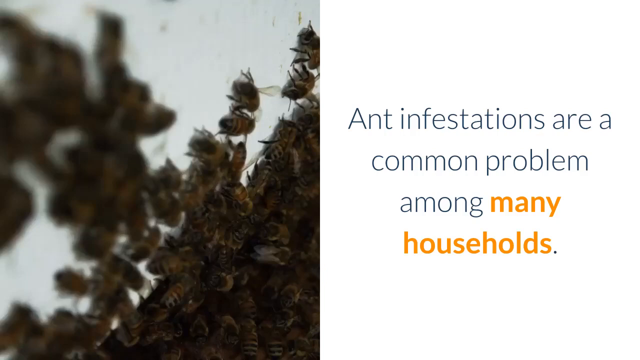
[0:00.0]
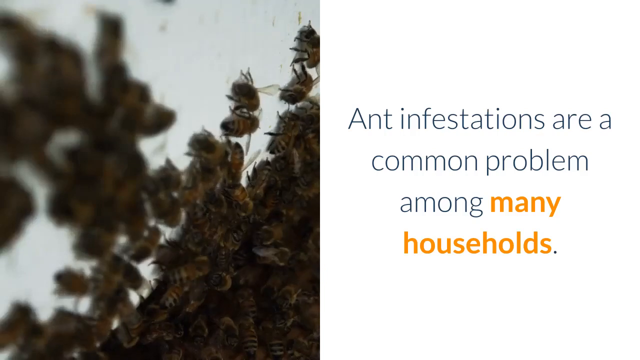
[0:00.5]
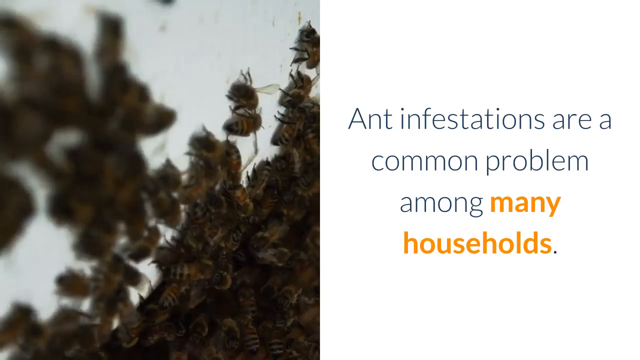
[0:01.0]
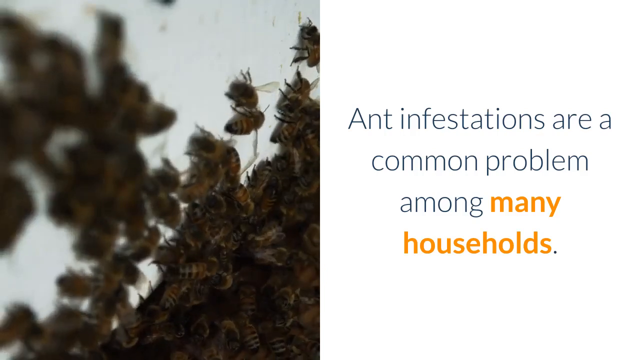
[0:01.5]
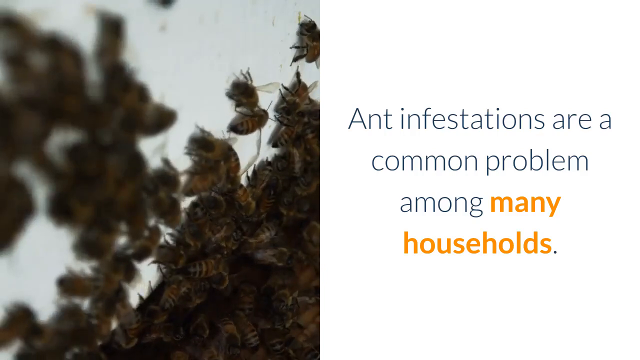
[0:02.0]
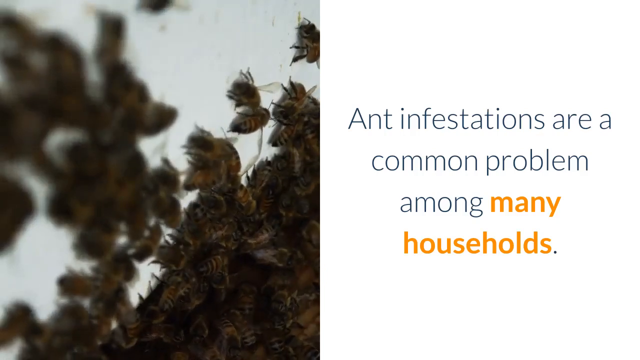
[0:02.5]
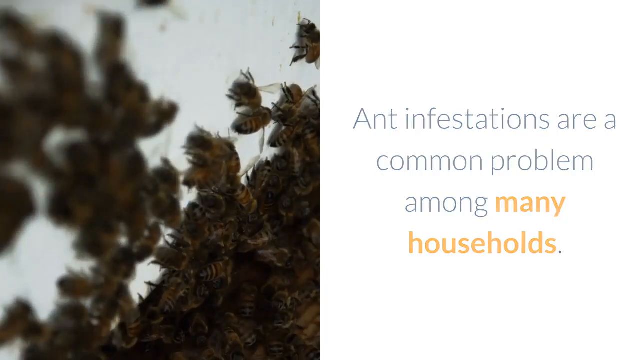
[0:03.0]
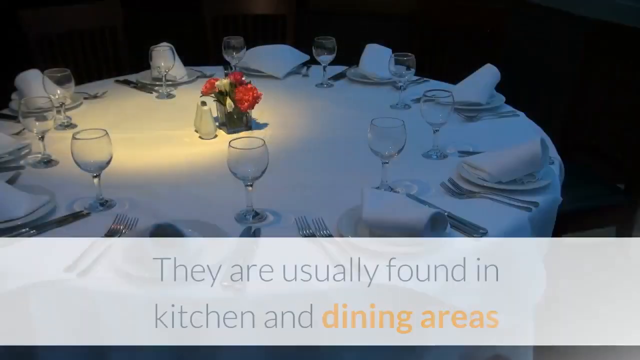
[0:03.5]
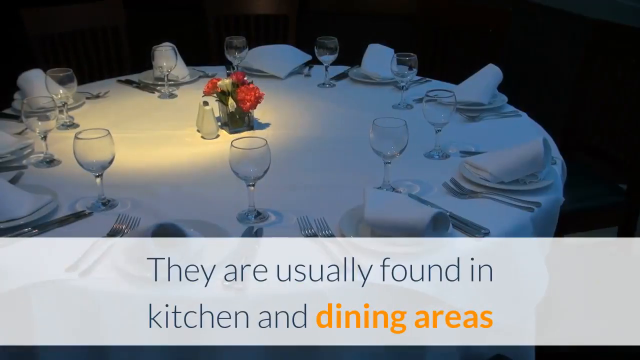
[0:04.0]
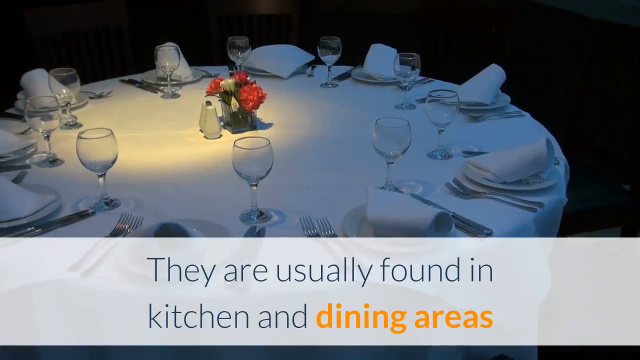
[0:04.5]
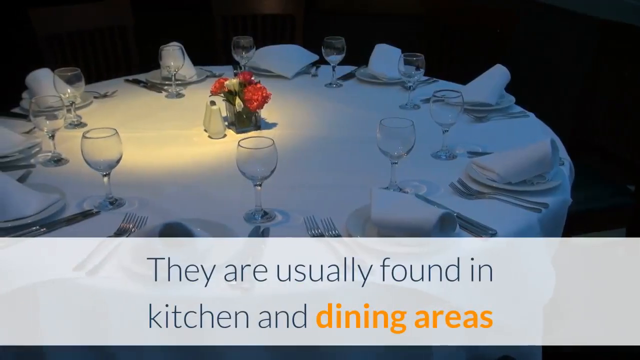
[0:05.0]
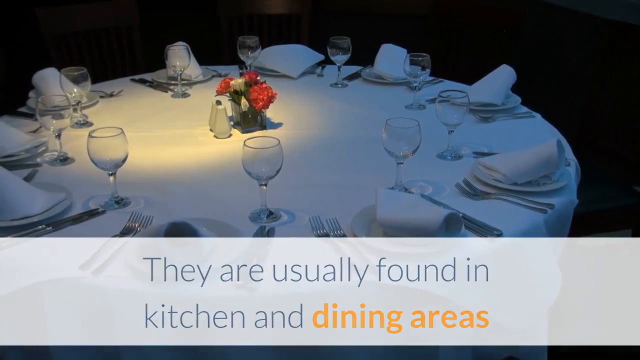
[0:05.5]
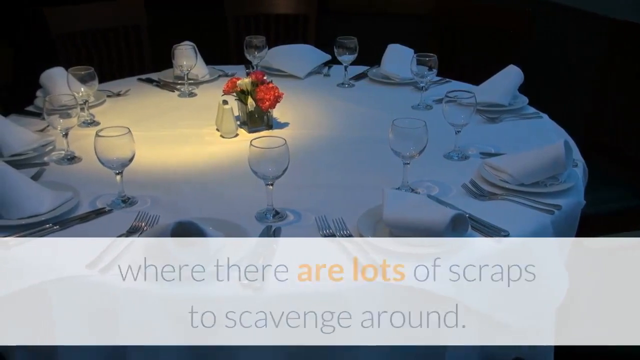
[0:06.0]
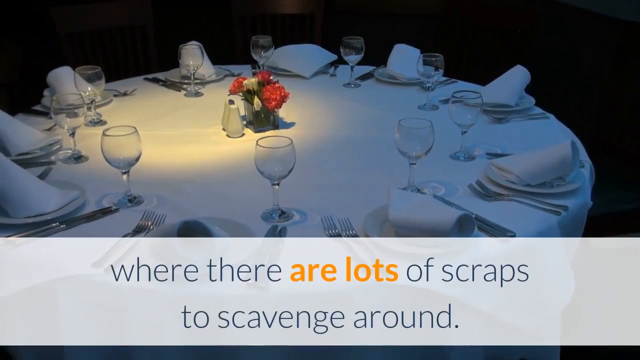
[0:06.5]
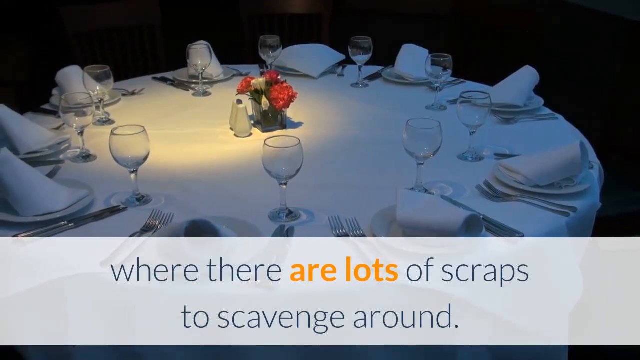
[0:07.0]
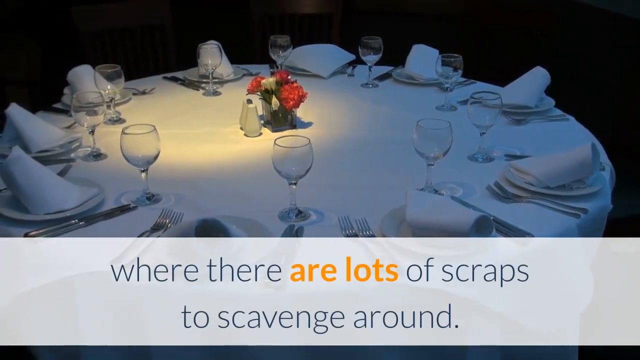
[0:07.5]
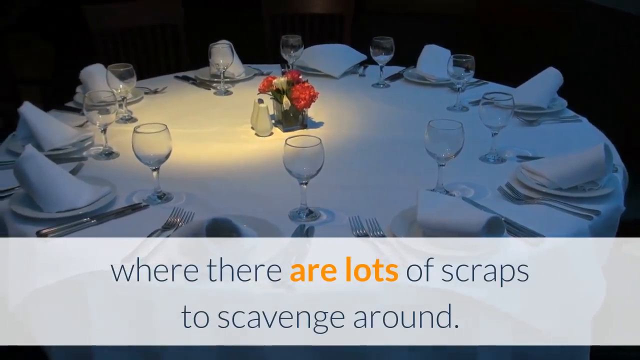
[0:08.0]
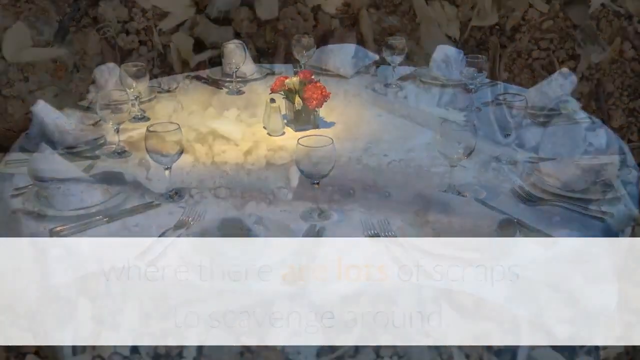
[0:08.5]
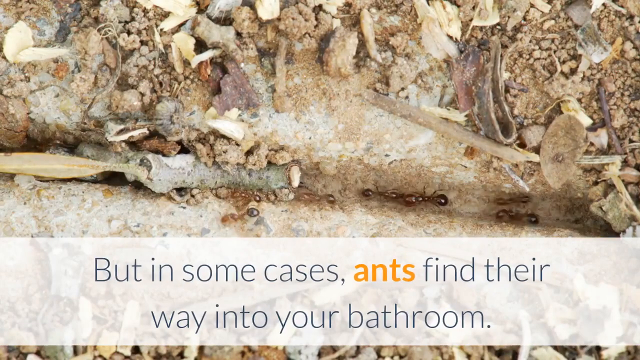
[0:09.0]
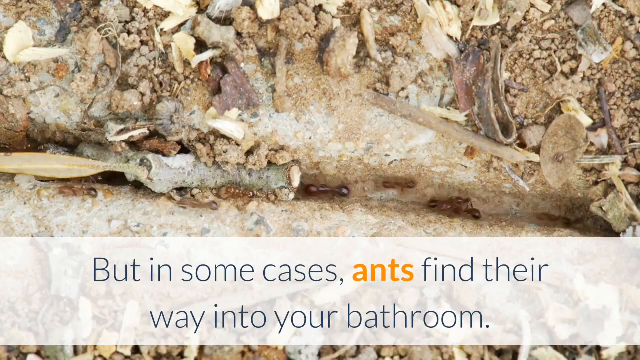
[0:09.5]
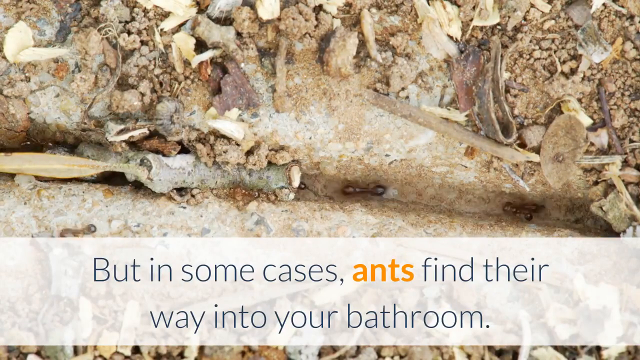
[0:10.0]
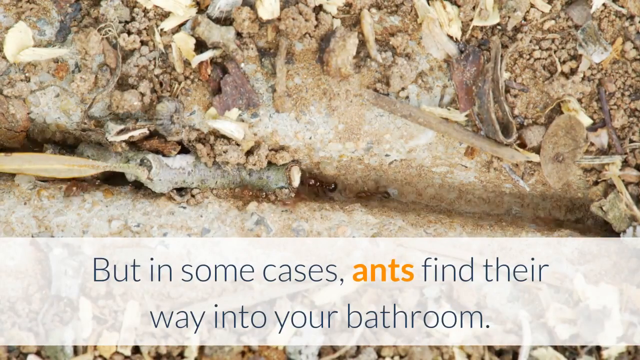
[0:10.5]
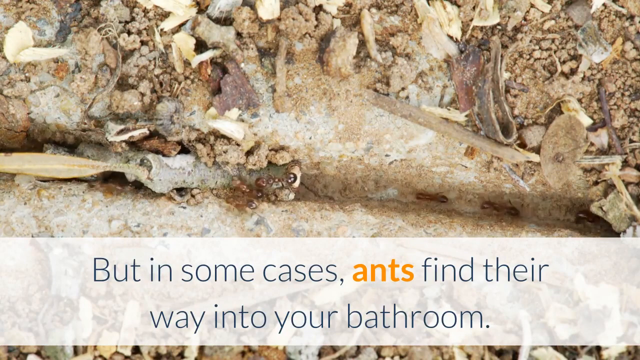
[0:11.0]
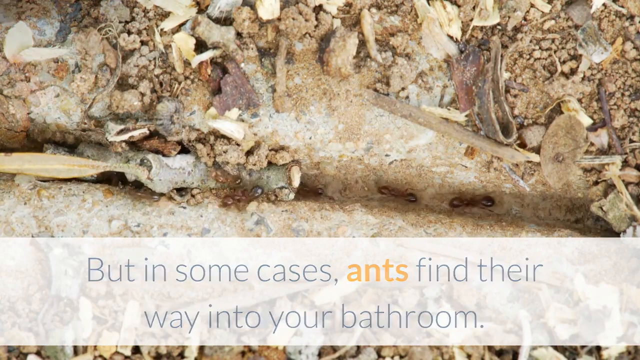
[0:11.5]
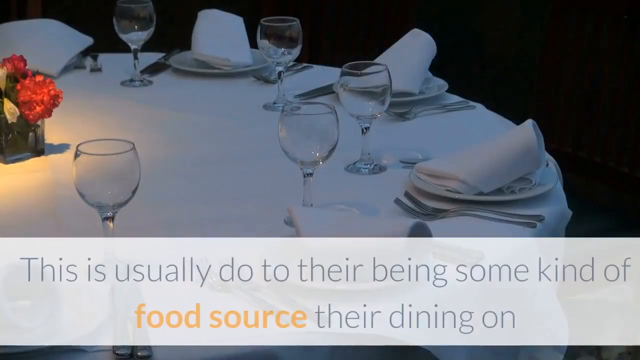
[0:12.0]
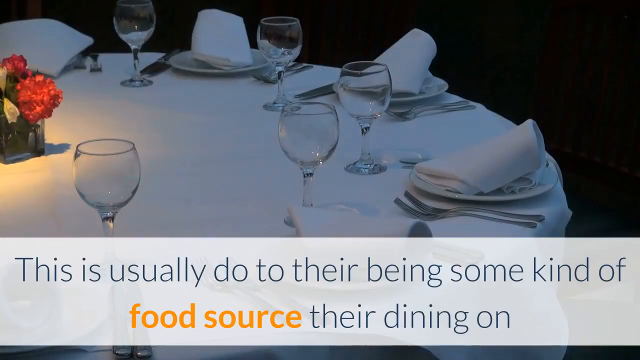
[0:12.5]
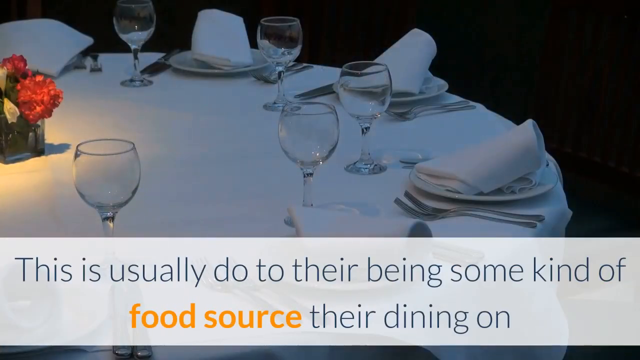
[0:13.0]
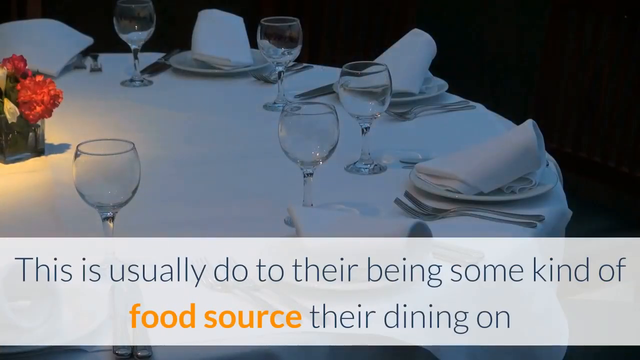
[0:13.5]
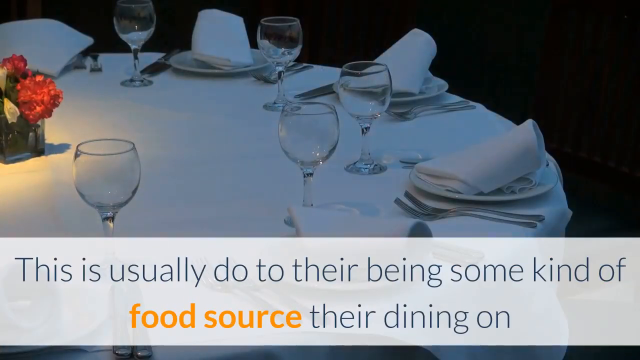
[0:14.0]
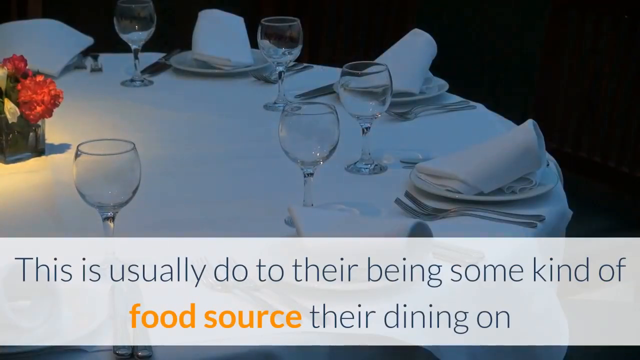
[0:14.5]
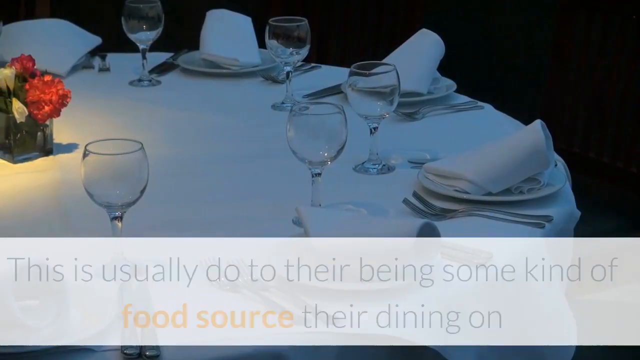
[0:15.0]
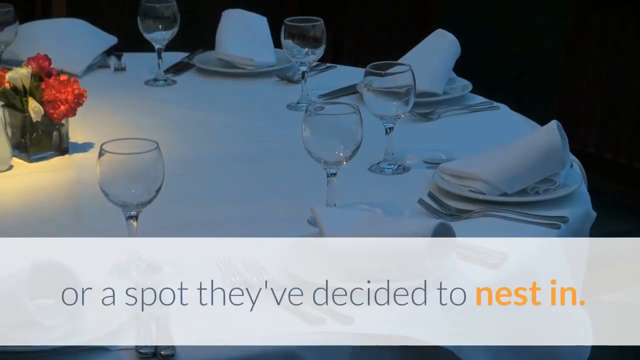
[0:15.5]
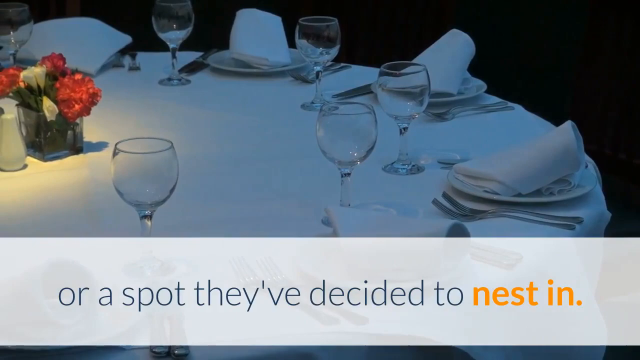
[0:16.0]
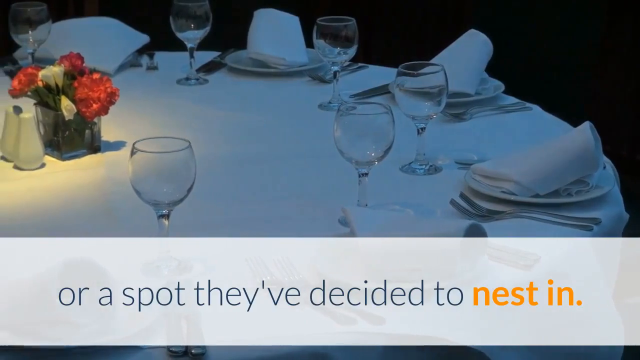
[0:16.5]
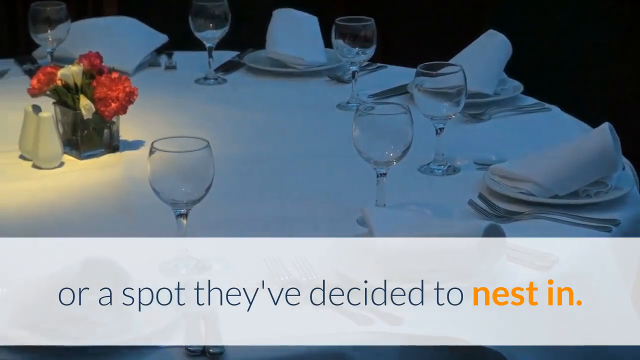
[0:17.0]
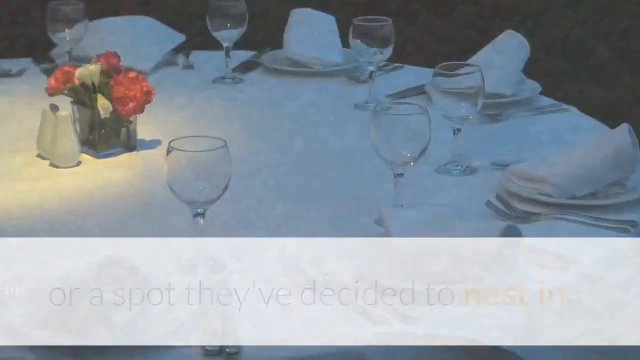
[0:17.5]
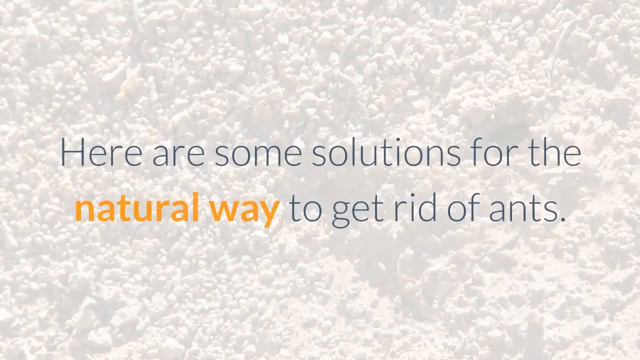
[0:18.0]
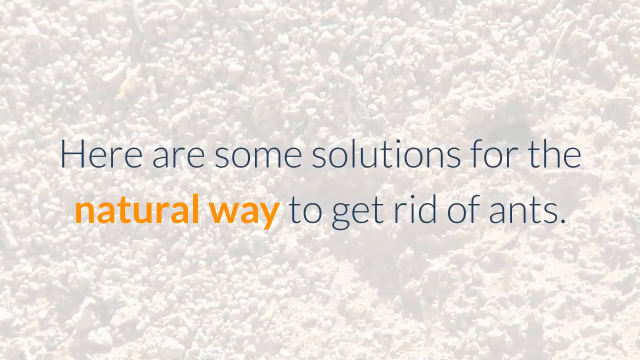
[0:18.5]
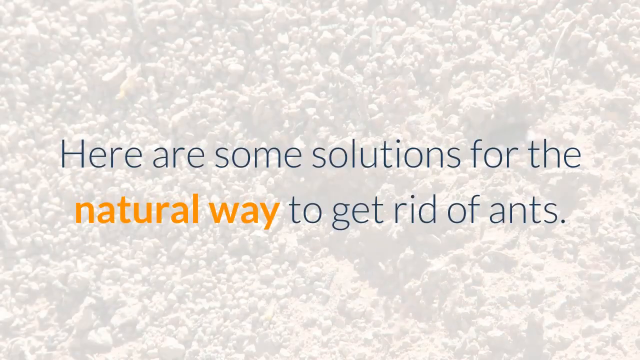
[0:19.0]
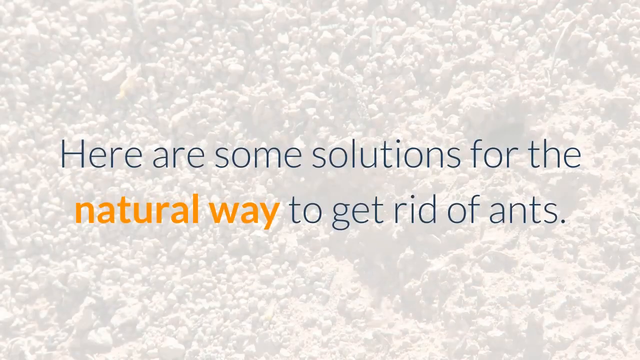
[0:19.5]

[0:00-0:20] What looks like a slideshow begins. On the right, against a white background, text reads "infestations are a common problem among many households," with "many households" kind of bold and orange. On the left are what look like close-up pictures of ants moving around. The next slide shows a fancy round dining room table with flowers in the middle, a salt and pepper shaker, and glasses and silverware around the outside of the table. At the bottom, blue text reads "they're usually found in kitchen and dining areas," with "dining areas" in bold orange, followed by text reading "where there are lots of scraps to scavenge," and the view kind of pans over the table. A close-up then shows ants crawling through a little tunnel, with text at the bottom reading "but in some cases ants have found their way into your bathroom," where "ants" is bold orange. The ants crawl, and then the scene with the table returns with more text at the bottom.